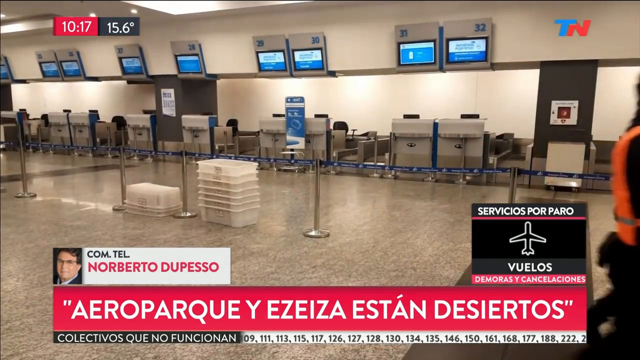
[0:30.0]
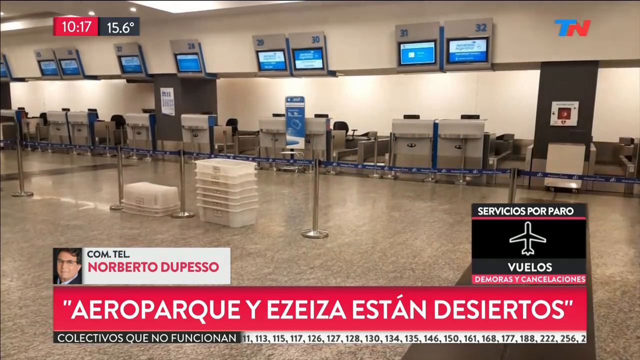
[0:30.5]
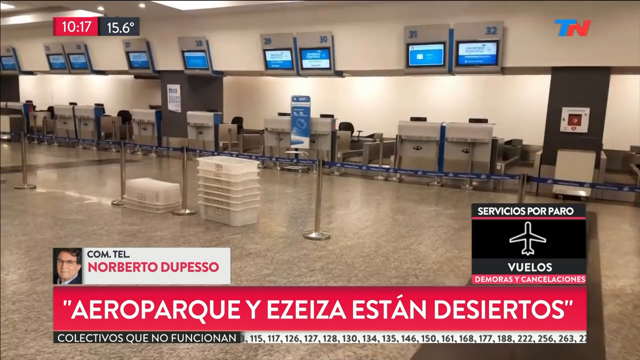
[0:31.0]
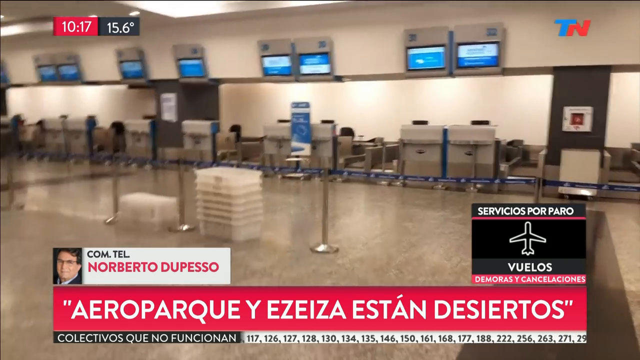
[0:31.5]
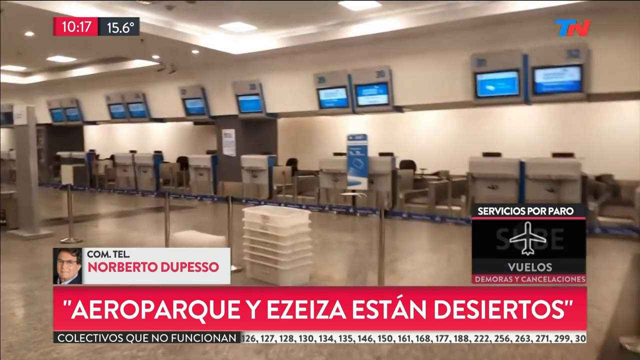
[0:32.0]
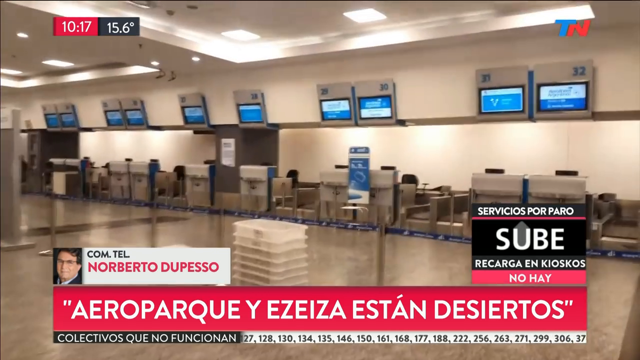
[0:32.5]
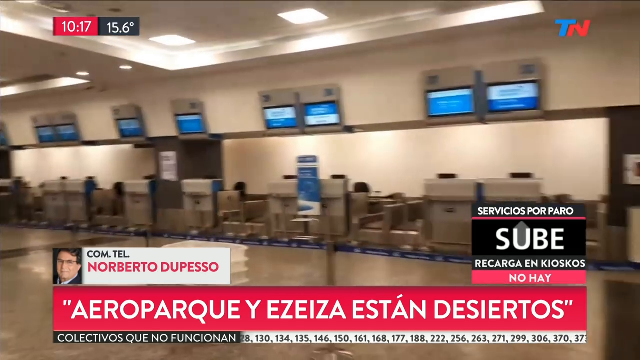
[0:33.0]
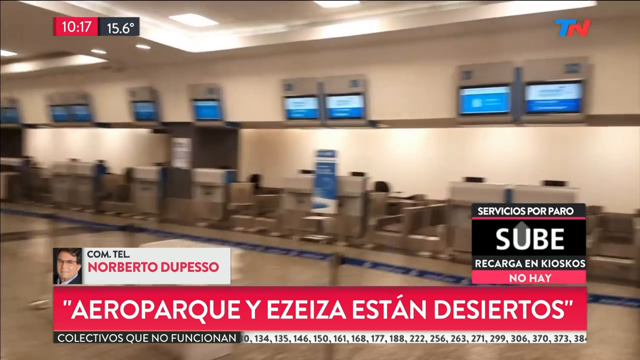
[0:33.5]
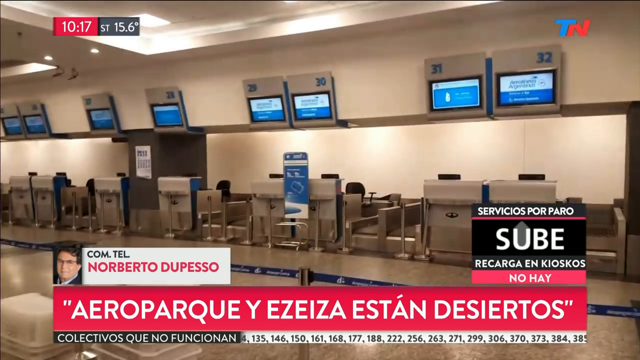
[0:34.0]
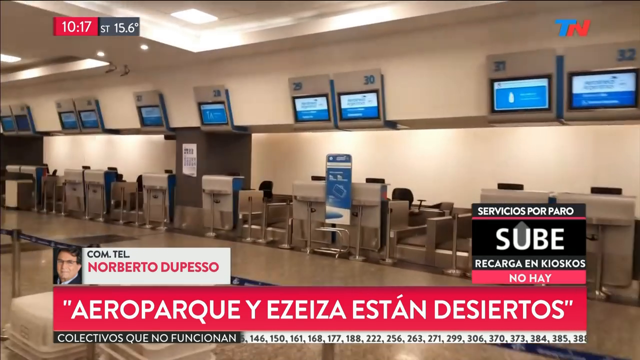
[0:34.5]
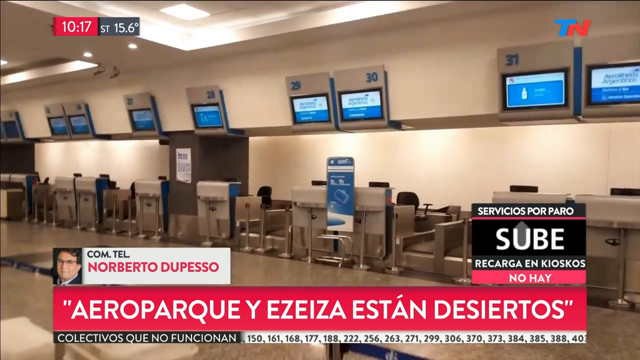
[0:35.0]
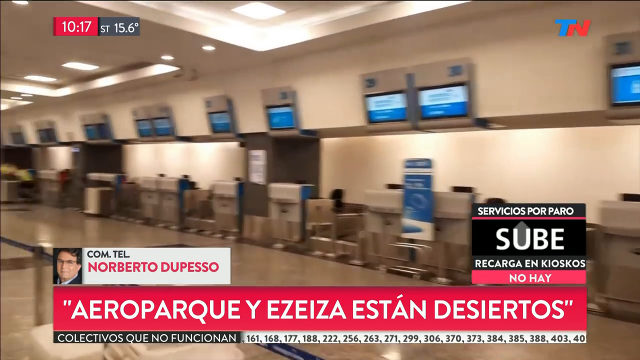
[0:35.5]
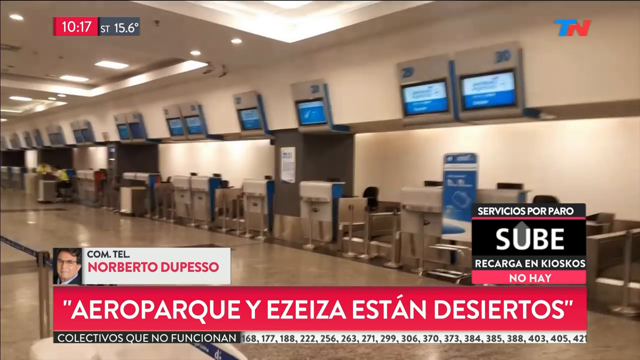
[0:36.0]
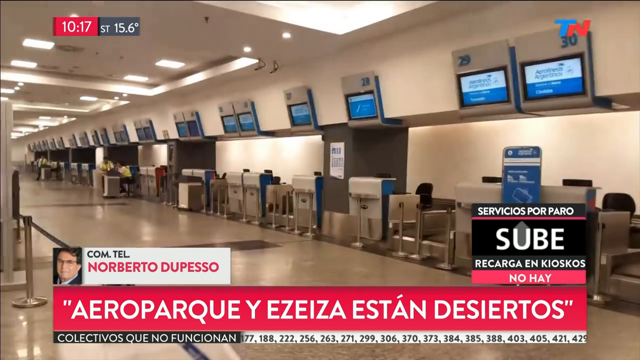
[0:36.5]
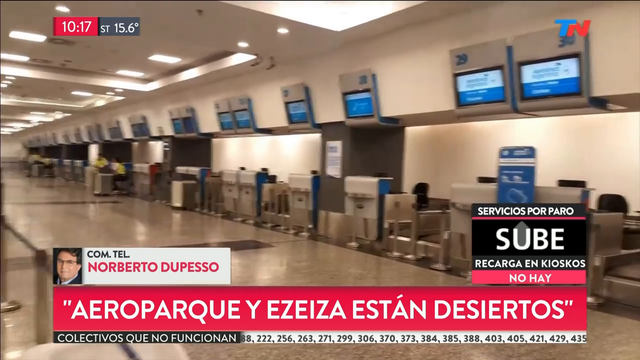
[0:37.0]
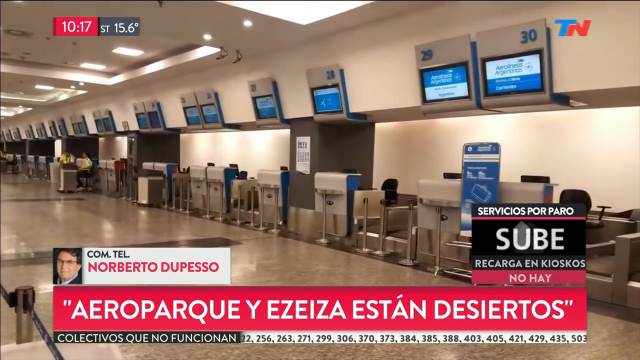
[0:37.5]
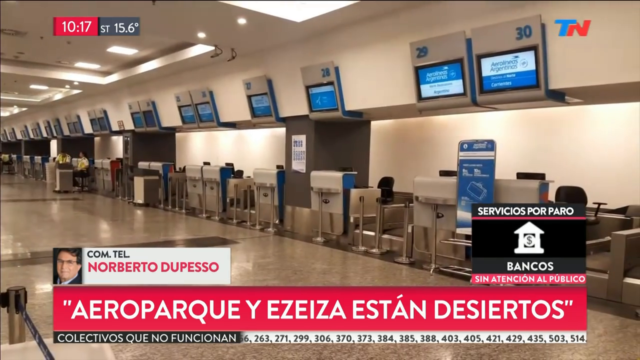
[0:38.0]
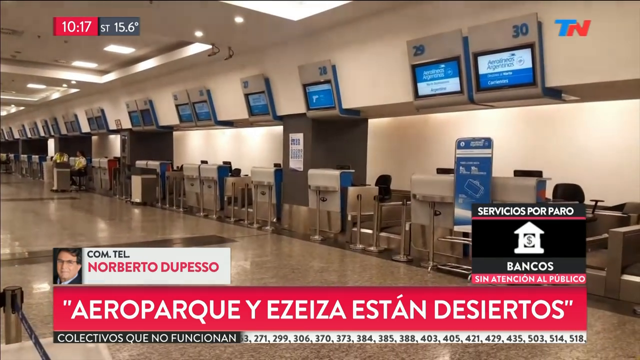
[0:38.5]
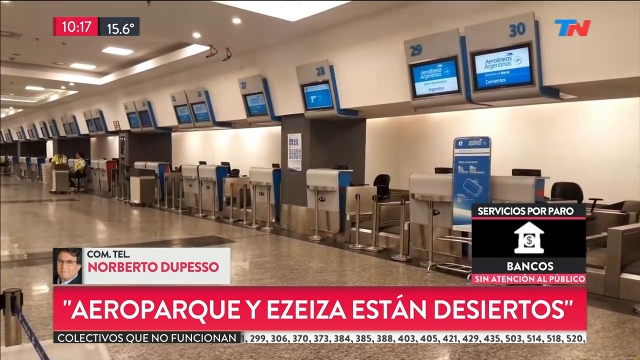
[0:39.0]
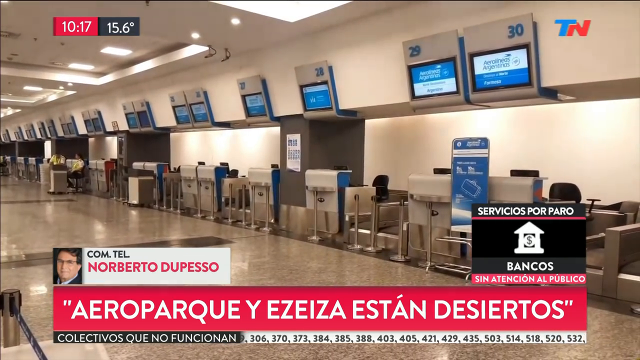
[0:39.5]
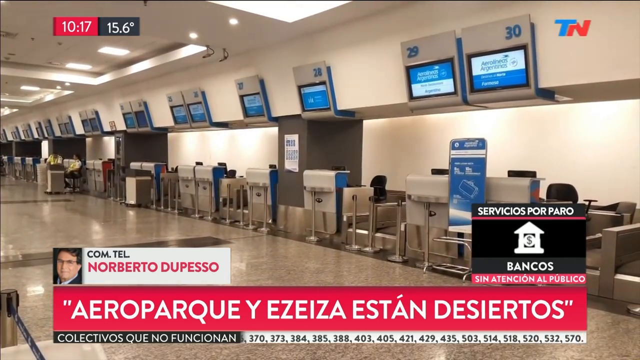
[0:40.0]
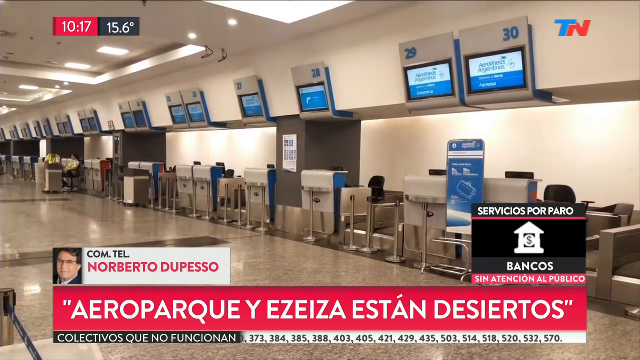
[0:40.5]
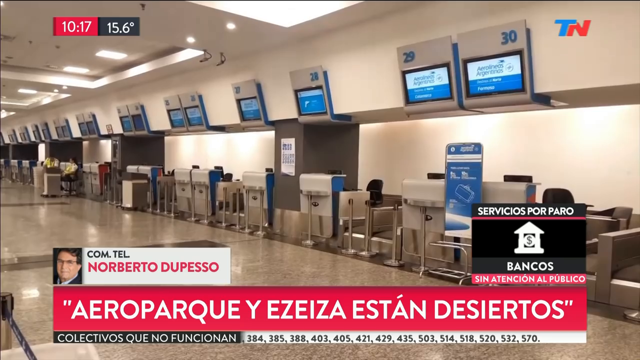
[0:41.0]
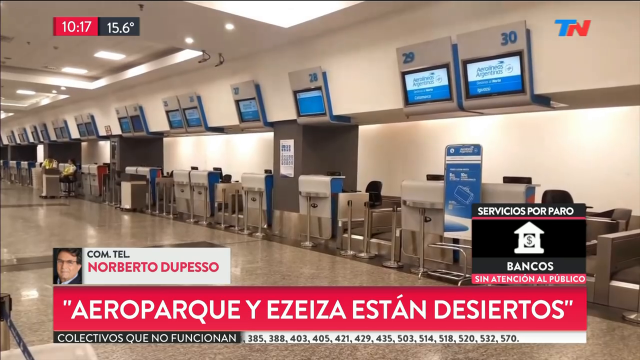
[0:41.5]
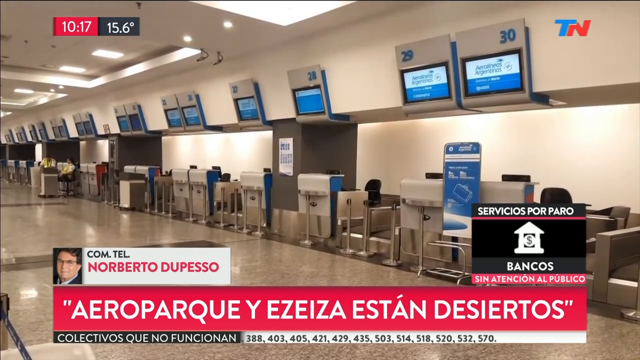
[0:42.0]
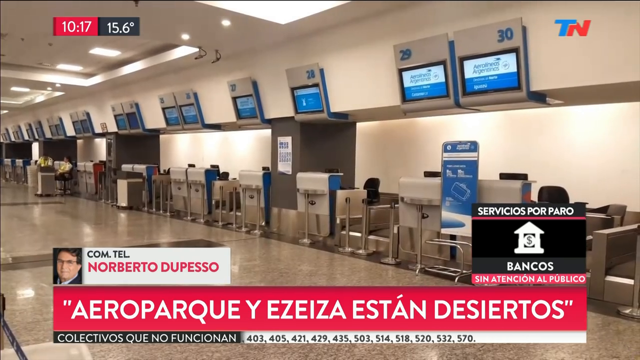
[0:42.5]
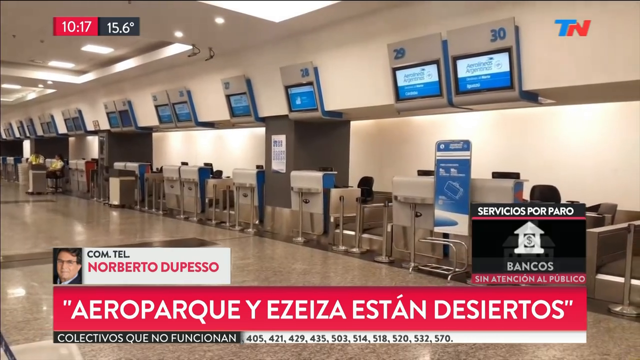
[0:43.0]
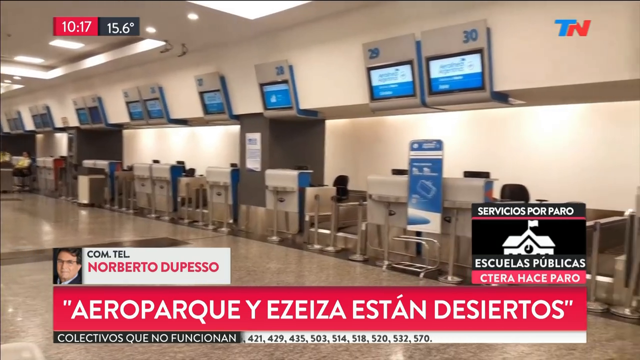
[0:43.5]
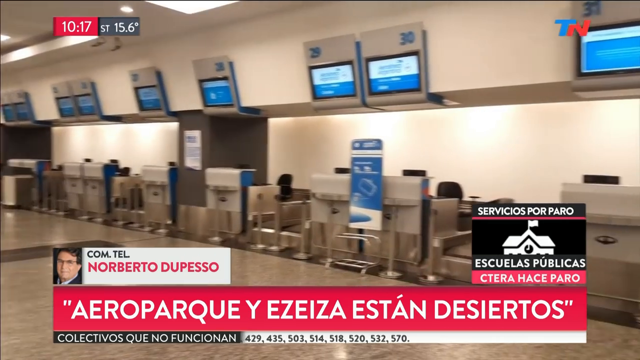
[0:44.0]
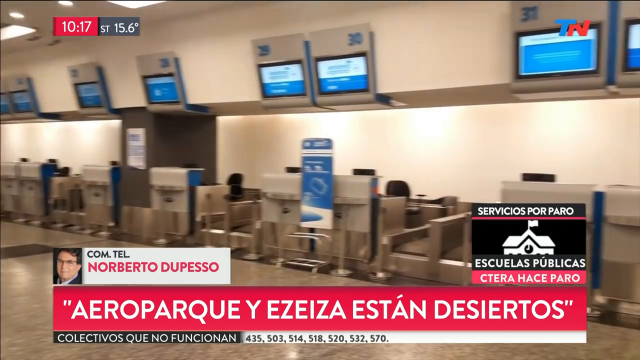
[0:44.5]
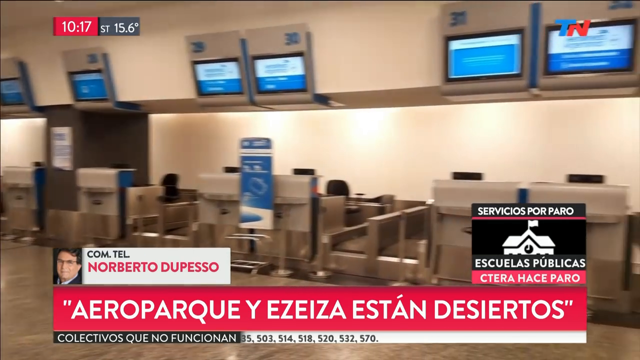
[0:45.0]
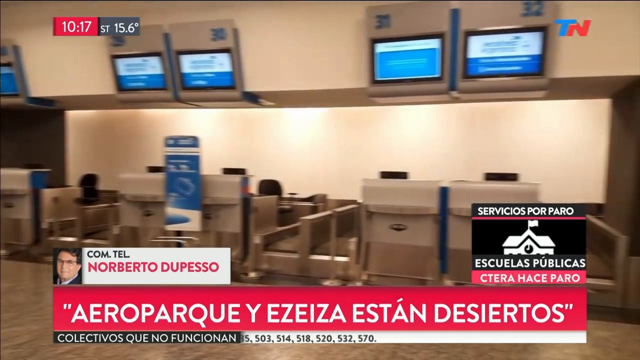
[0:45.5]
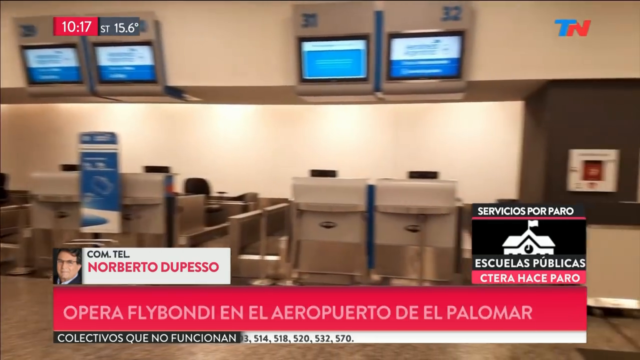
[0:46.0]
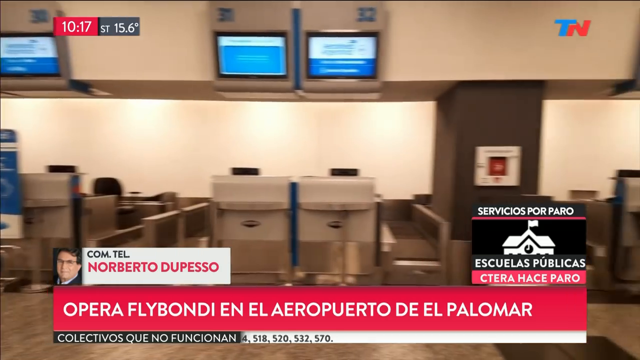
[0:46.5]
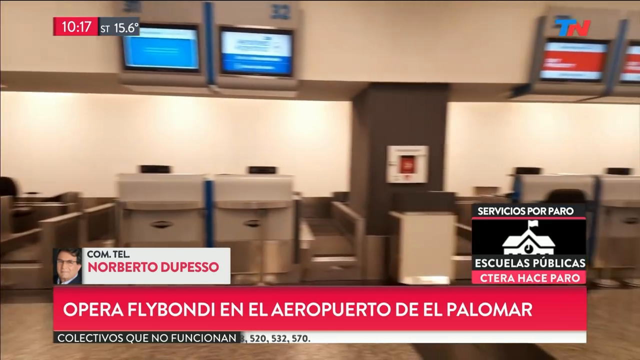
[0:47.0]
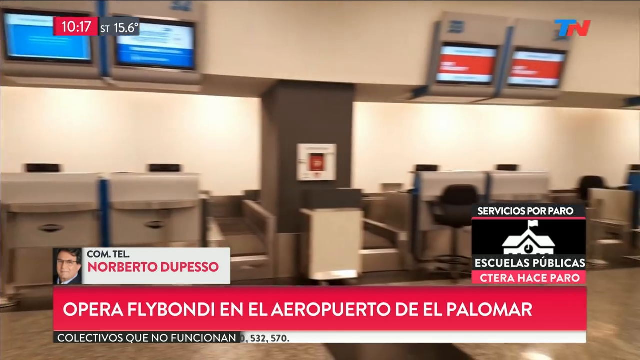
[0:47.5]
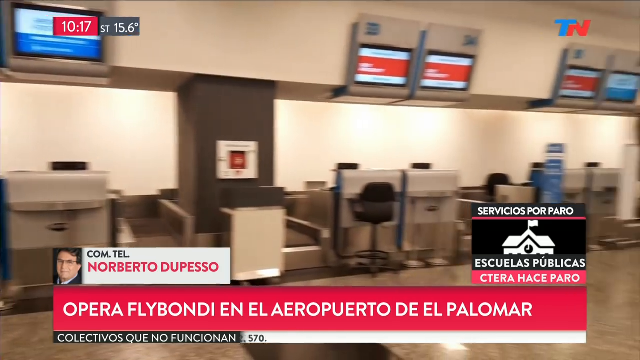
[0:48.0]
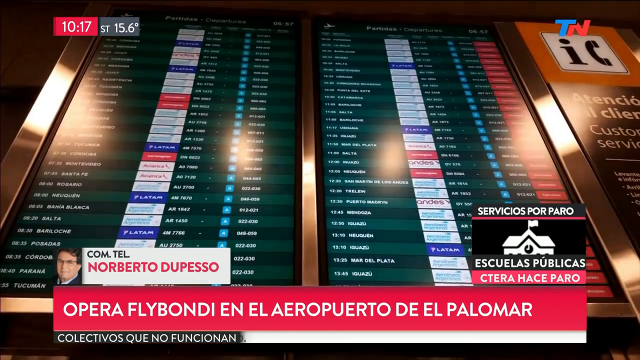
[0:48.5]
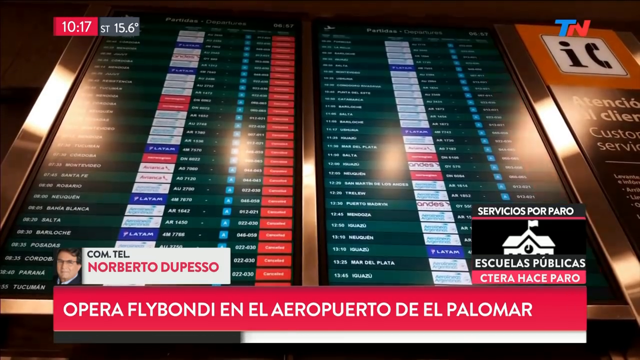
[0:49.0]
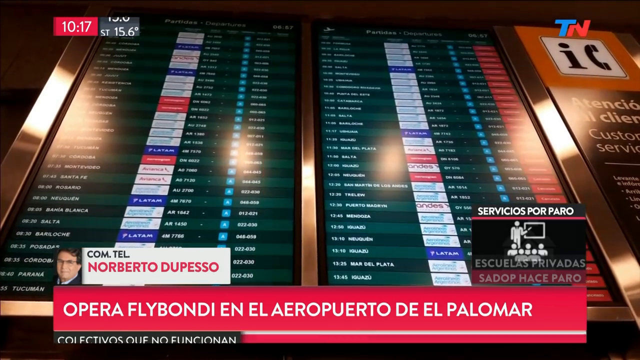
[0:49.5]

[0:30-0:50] The camera moves through the rail station, its unsteady movement suggesting it is being carried by a person, and it spins around to take in different parts of the station. It captures a small screen up high showing travel details, stands, rails that prevent people from reaching the other side, and waiting stations. Later it shows the two big screens with departure and arrival times.